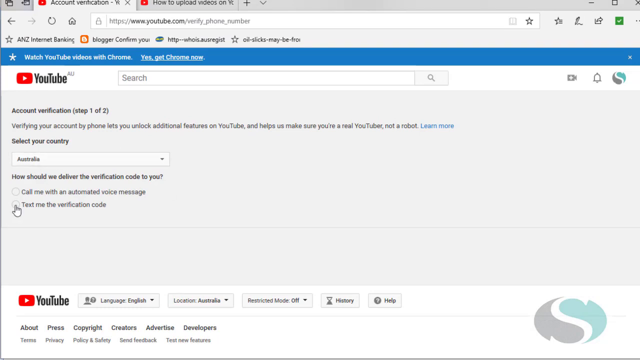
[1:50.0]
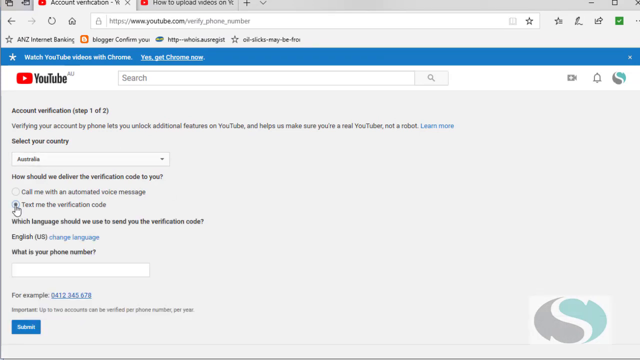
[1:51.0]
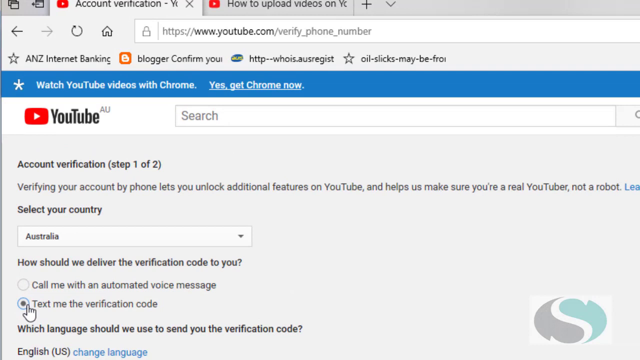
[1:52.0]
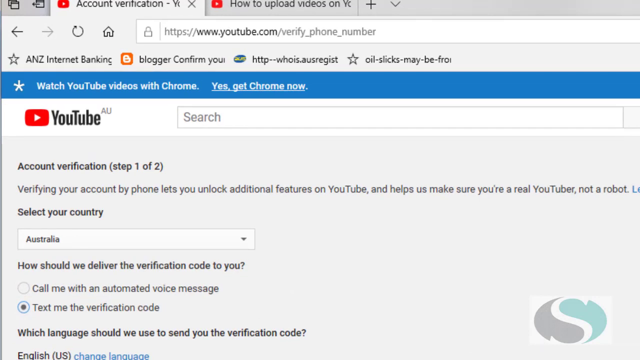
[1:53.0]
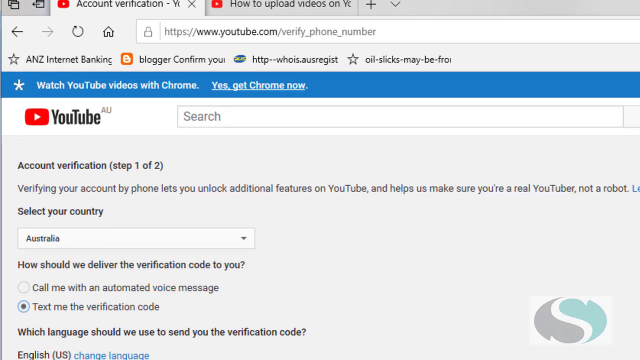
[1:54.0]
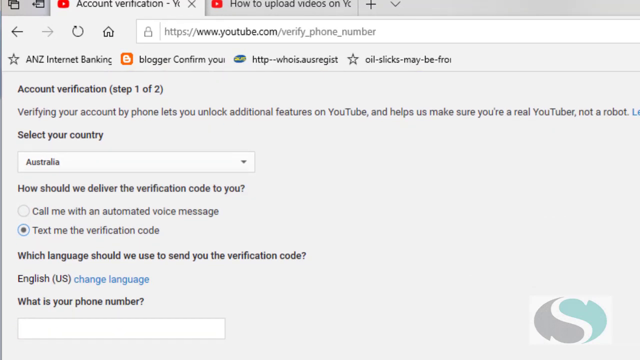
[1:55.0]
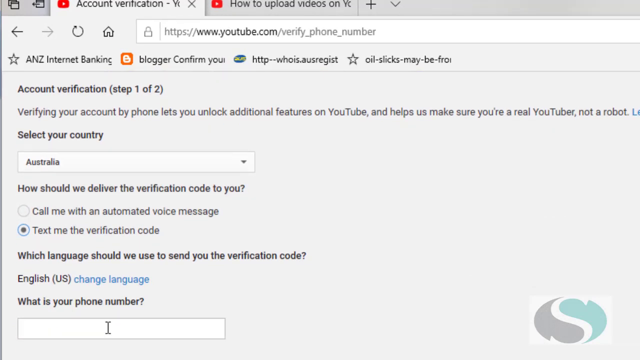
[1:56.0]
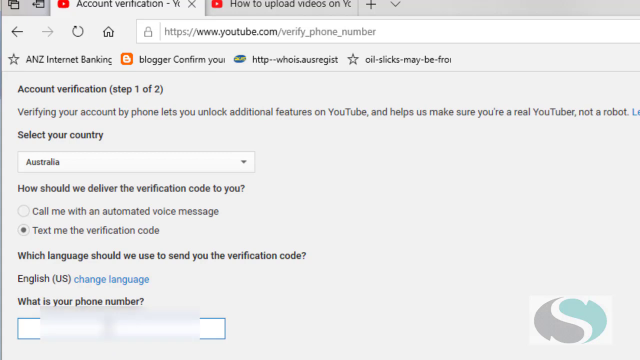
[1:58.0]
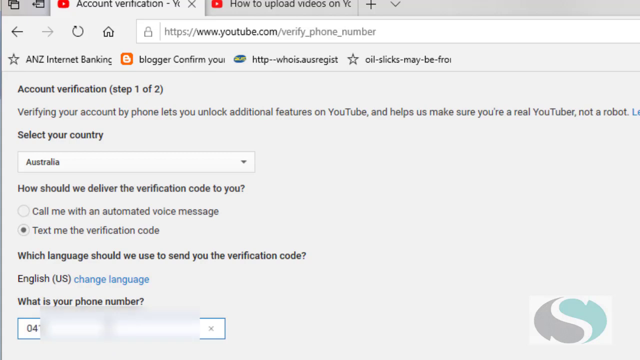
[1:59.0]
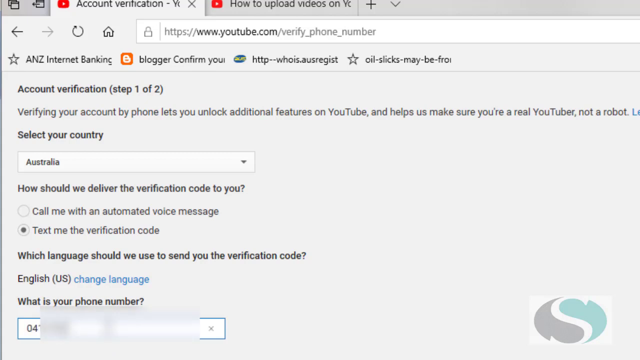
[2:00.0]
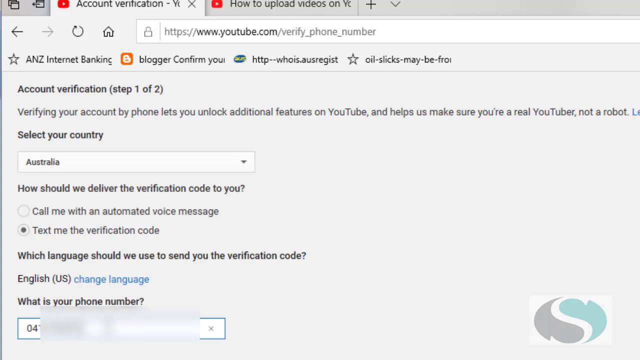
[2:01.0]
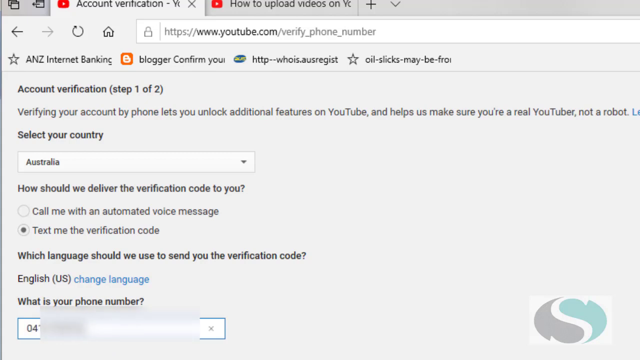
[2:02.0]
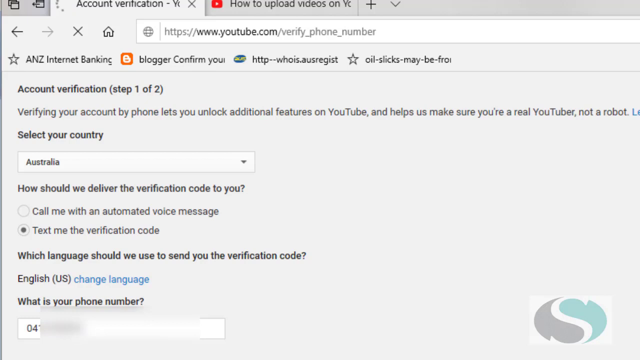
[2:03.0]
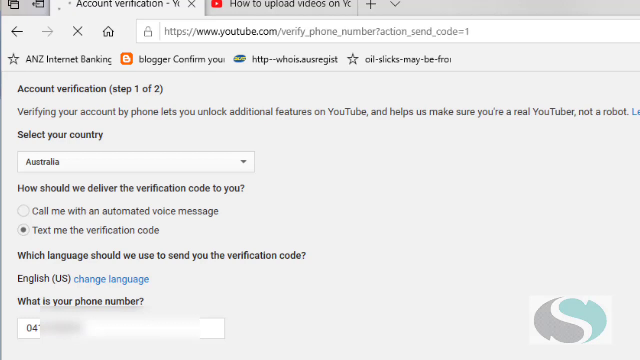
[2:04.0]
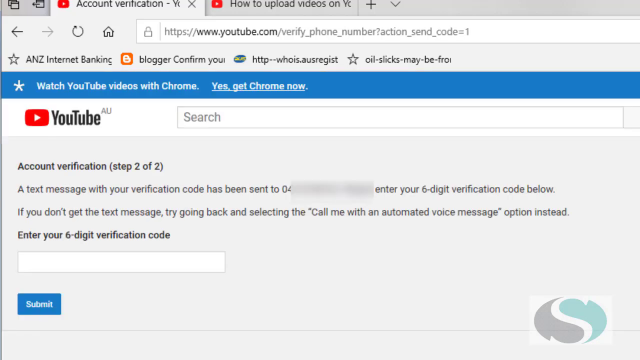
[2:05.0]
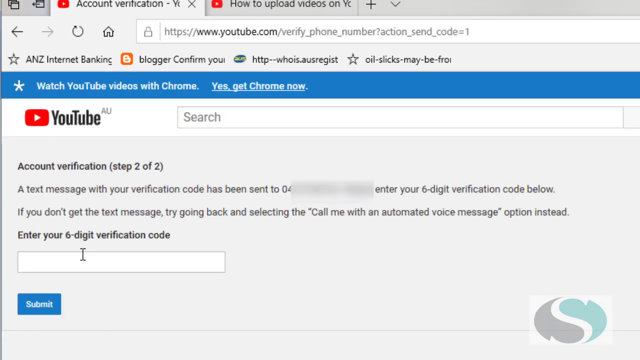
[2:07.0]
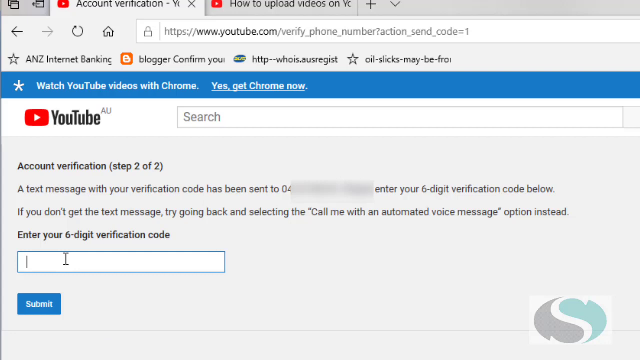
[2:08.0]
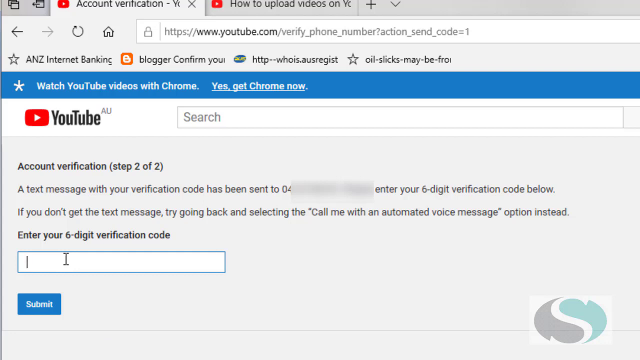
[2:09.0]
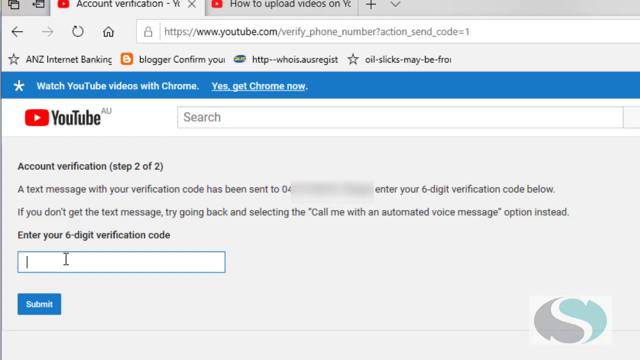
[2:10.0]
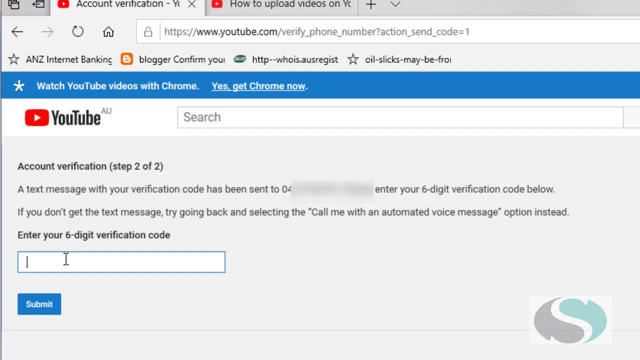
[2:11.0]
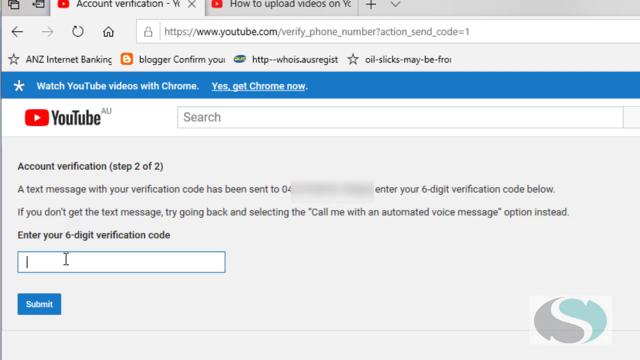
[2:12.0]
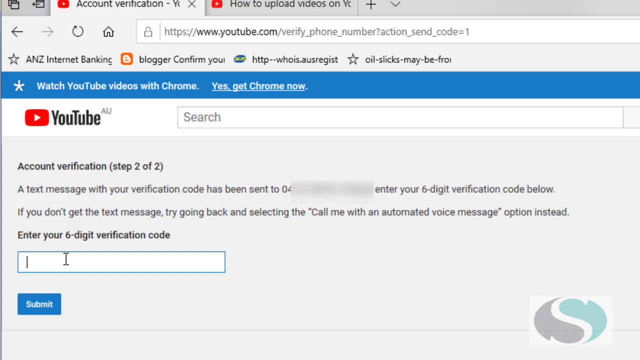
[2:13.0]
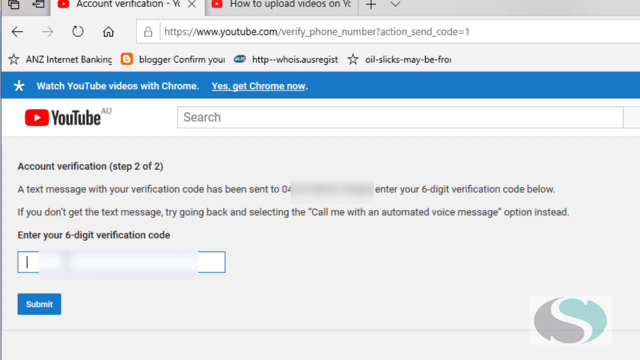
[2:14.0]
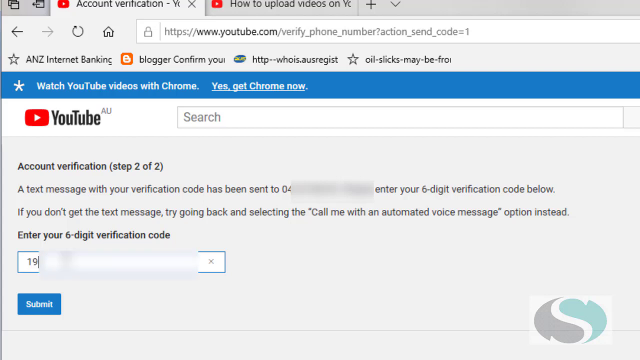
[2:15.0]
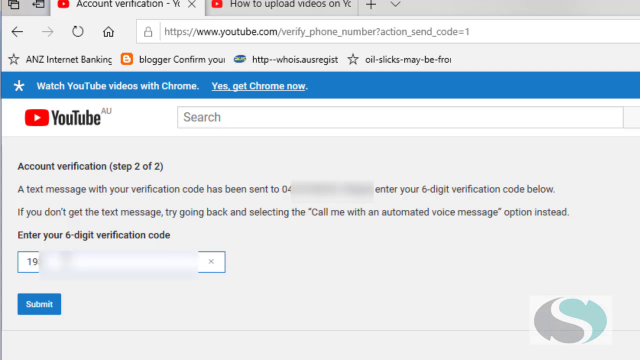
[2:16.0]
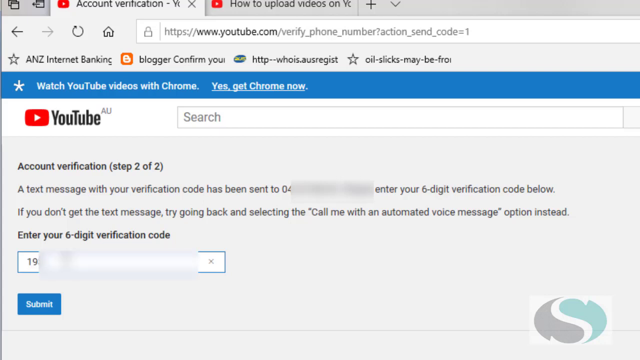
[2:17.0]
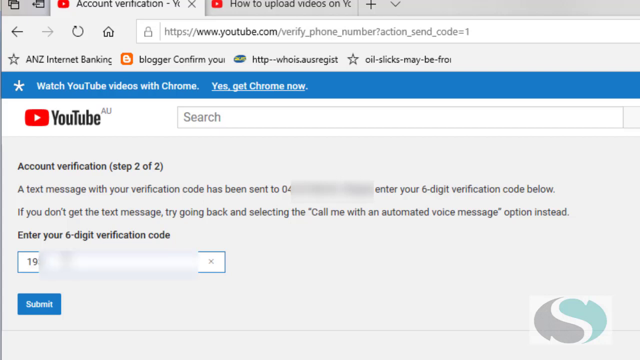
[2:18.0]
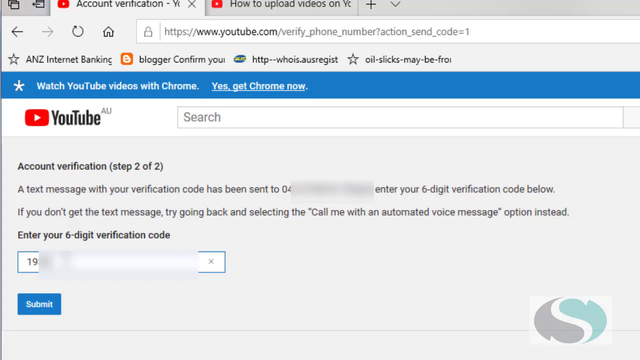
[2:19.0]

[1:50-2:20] A verification page appears, seemingly step one of two, headed "Step one, account verification." Beneath it the text reads "verifying your account by phone lets you unlock additional features on YouTube. It helps us make sure you're a real YouTuber and not a robot," followed by "learn more," which is blue, unlike the other words, and looks clickable. Below that is "select your country" with Australia selected, and the question "how should we deliver the verification code to you?" with "text me the verification code" chosen. The view zooms in on the details. In the section reading "what is your phone number," the user enters their phone number while covering it with a tool so it cannot be seen. Next comes what seems to be account verification step two of two, which also contains the phone number, a small paragraph, and a field reading "enter your six-digit verification code"; the user enters the code, which is also covered up.